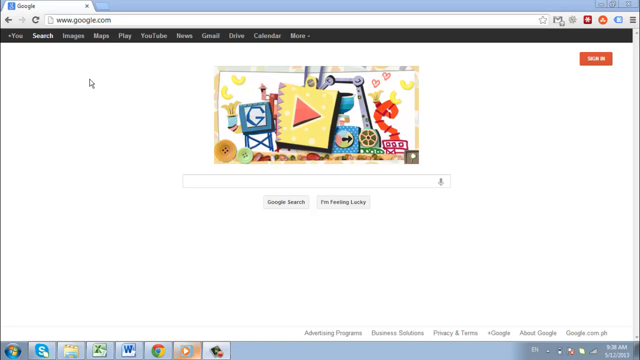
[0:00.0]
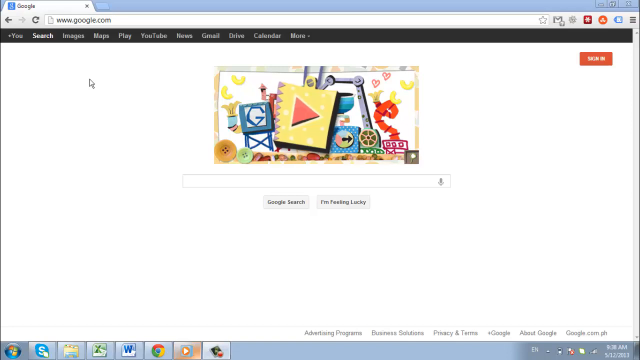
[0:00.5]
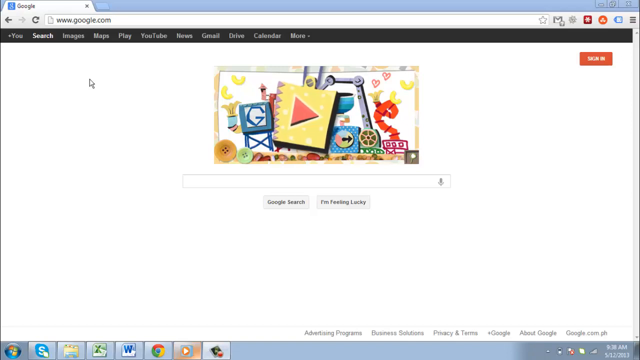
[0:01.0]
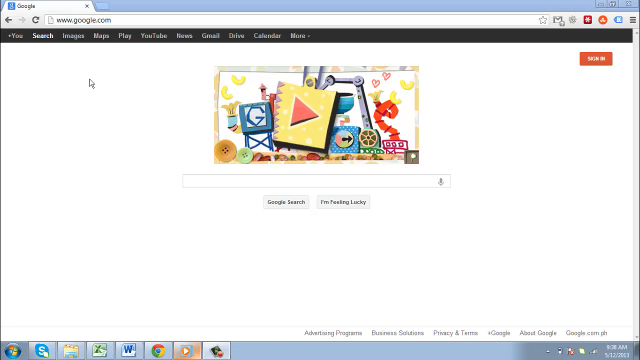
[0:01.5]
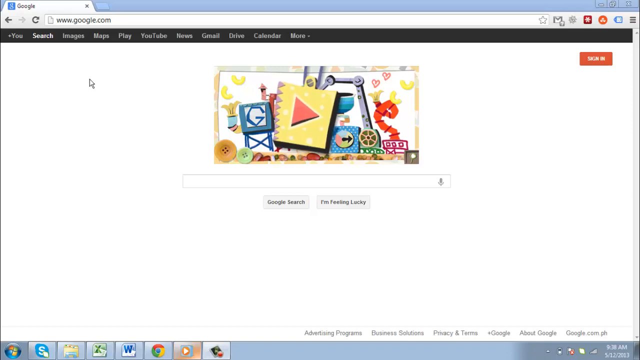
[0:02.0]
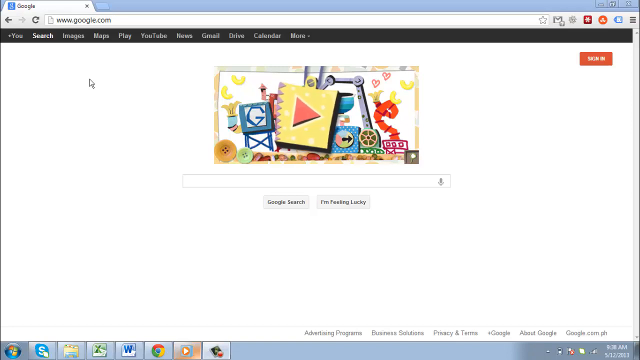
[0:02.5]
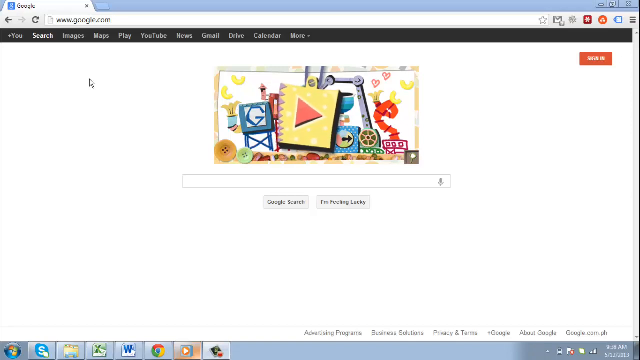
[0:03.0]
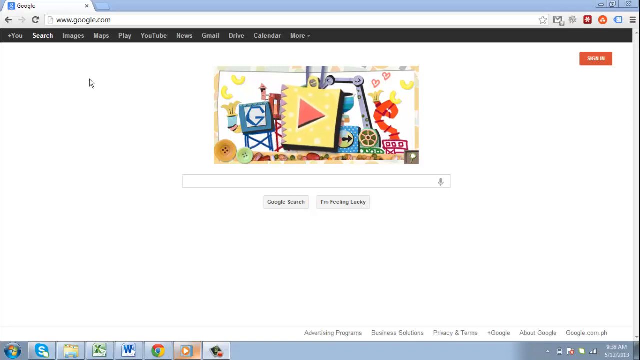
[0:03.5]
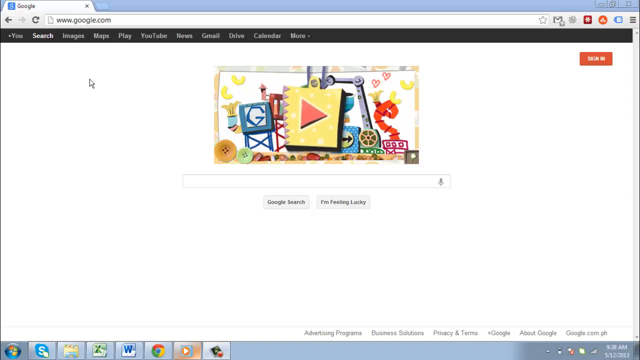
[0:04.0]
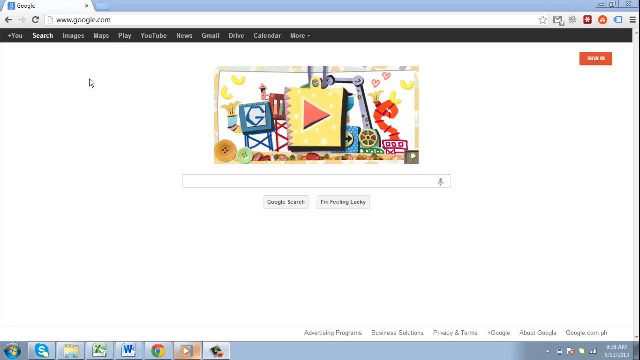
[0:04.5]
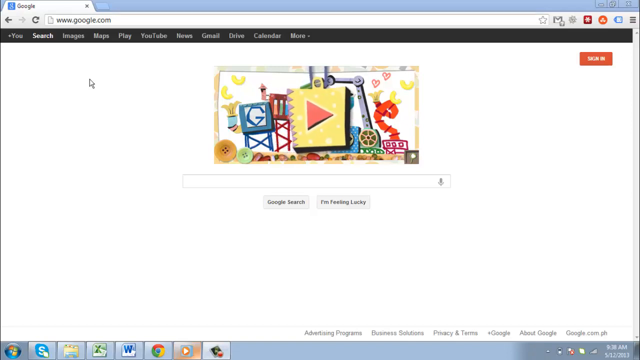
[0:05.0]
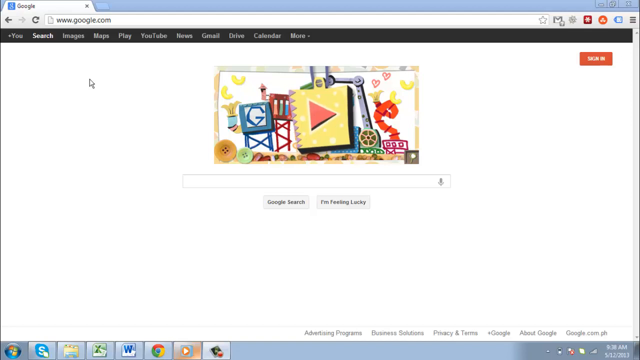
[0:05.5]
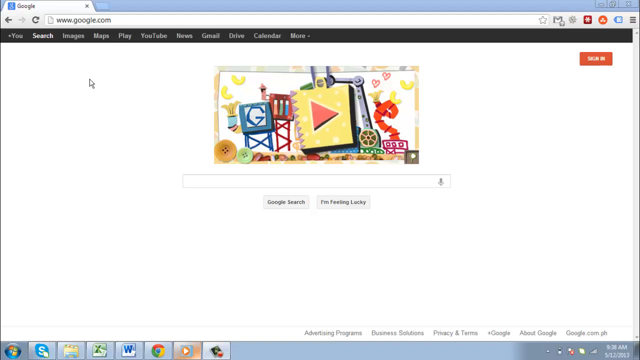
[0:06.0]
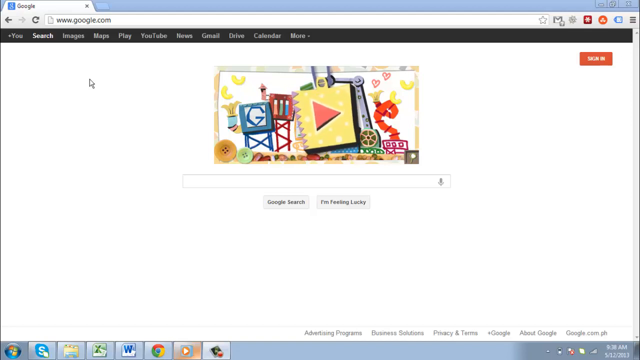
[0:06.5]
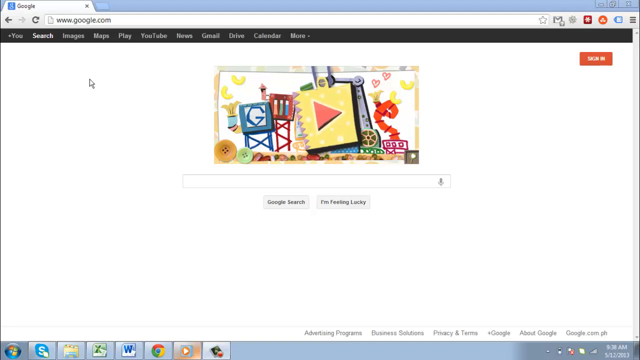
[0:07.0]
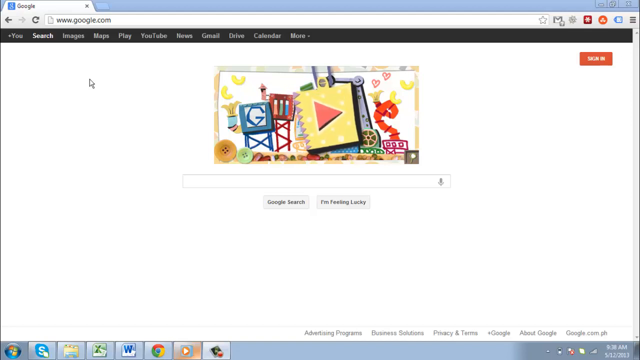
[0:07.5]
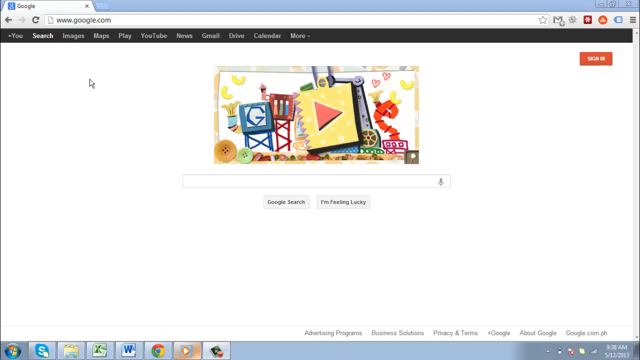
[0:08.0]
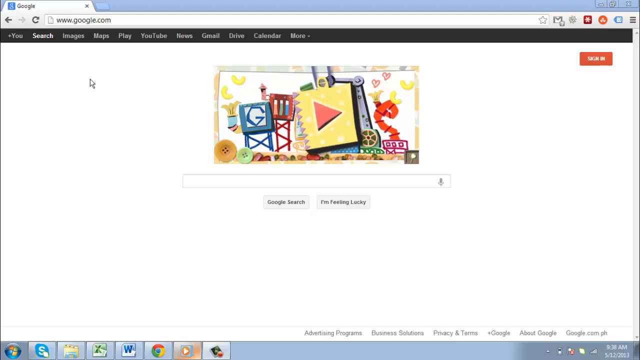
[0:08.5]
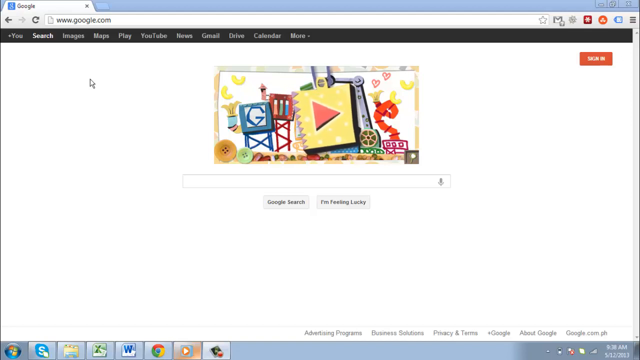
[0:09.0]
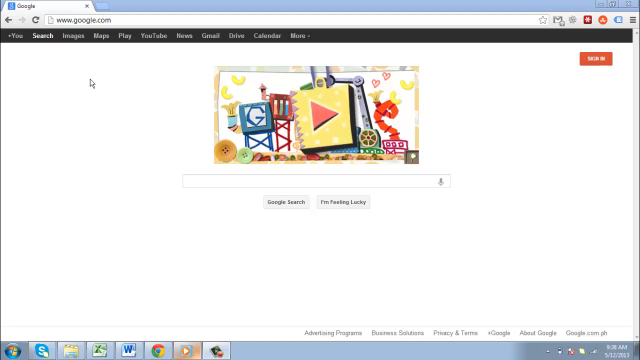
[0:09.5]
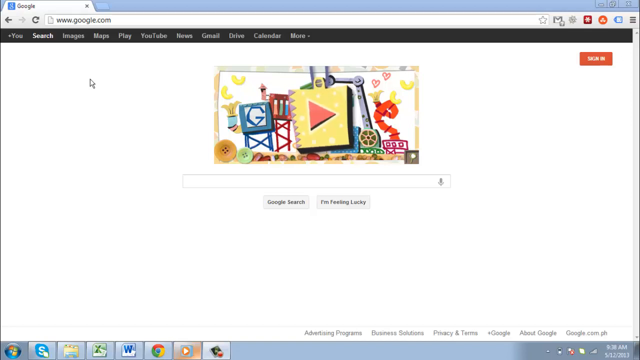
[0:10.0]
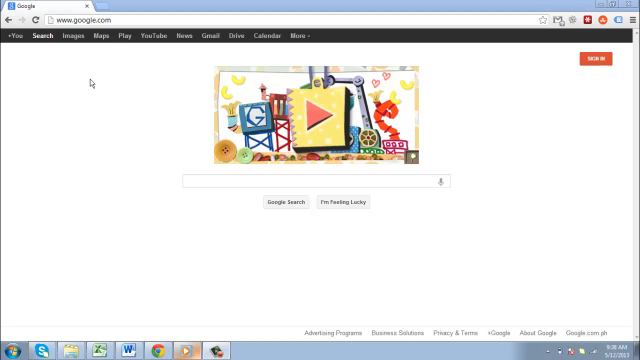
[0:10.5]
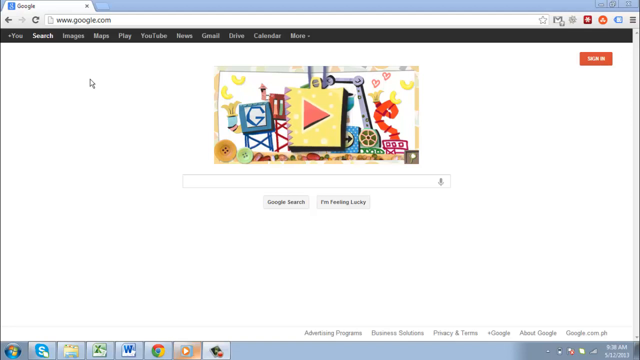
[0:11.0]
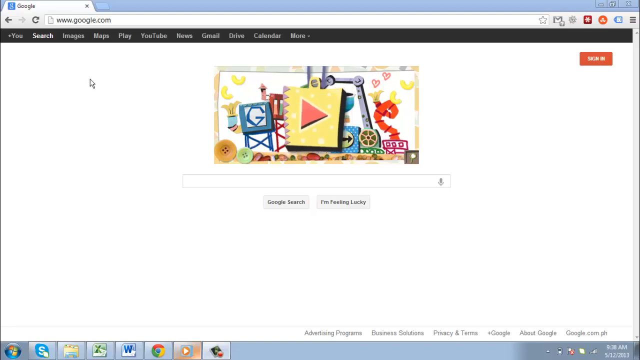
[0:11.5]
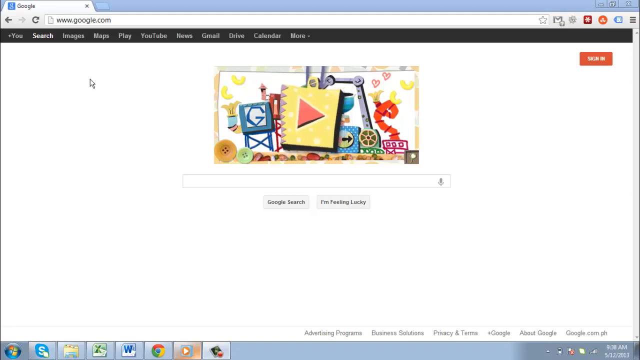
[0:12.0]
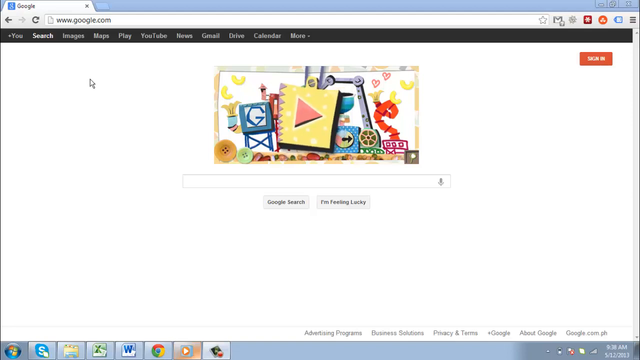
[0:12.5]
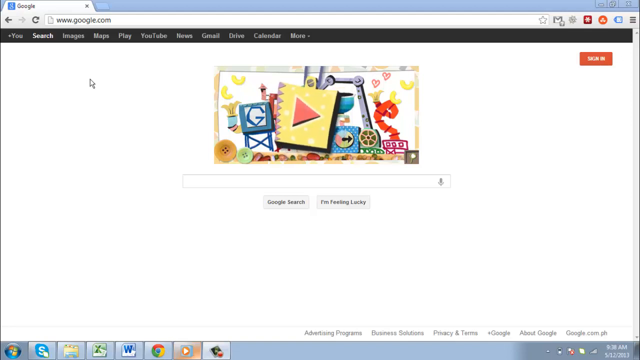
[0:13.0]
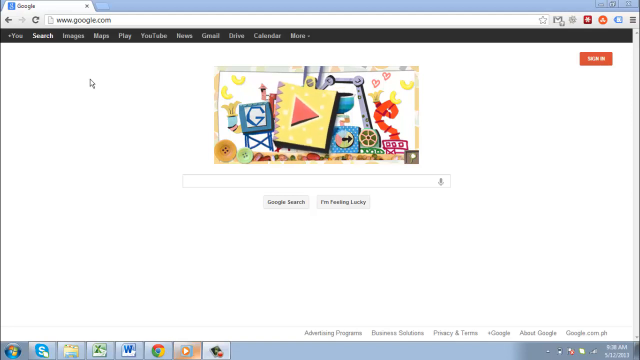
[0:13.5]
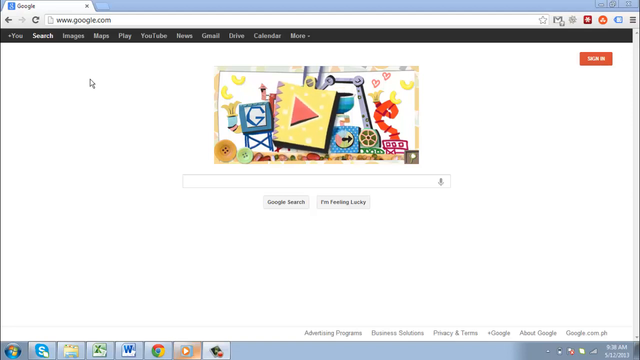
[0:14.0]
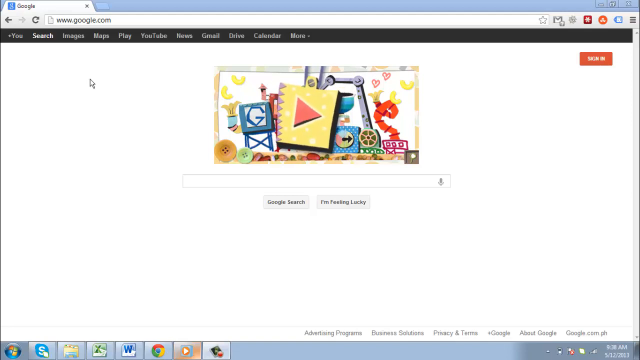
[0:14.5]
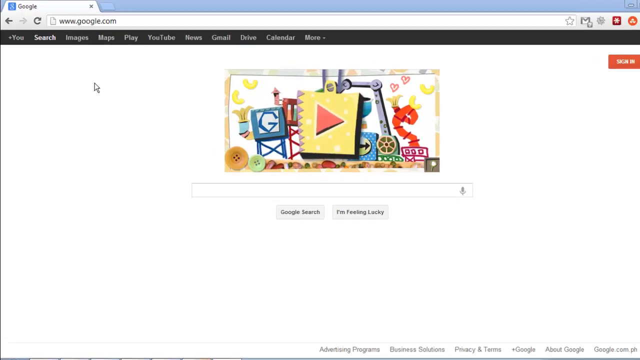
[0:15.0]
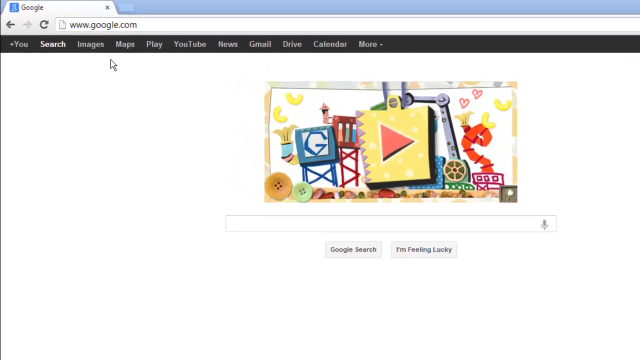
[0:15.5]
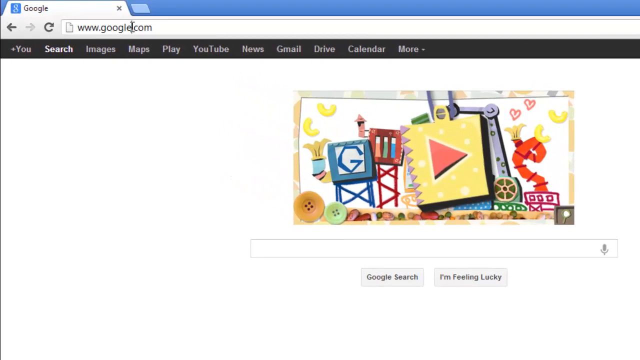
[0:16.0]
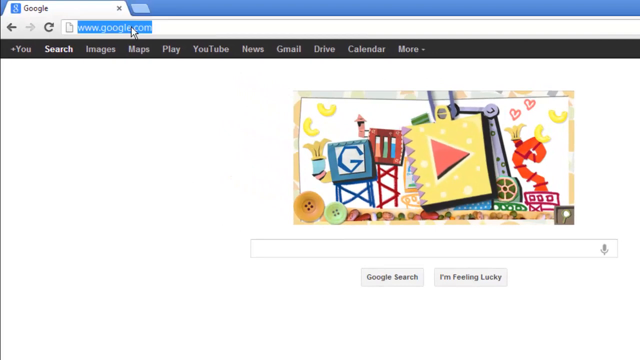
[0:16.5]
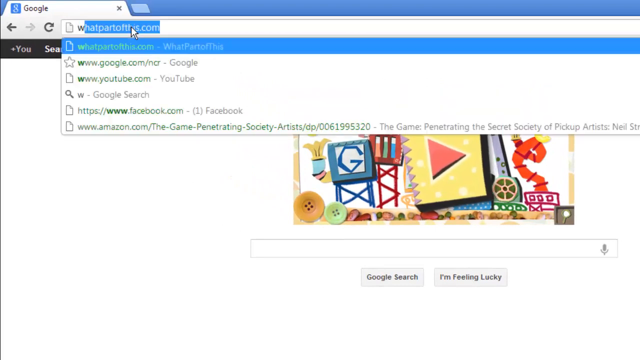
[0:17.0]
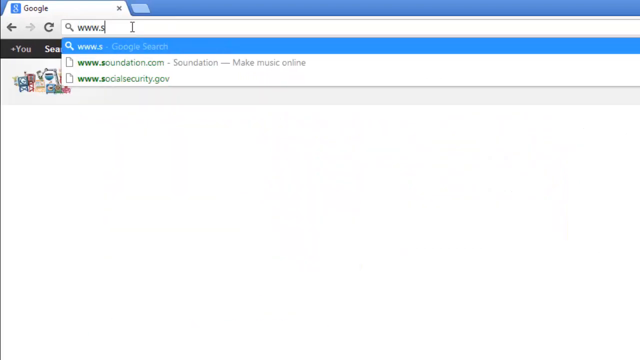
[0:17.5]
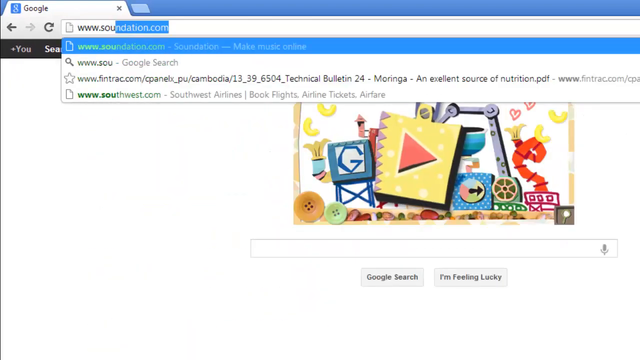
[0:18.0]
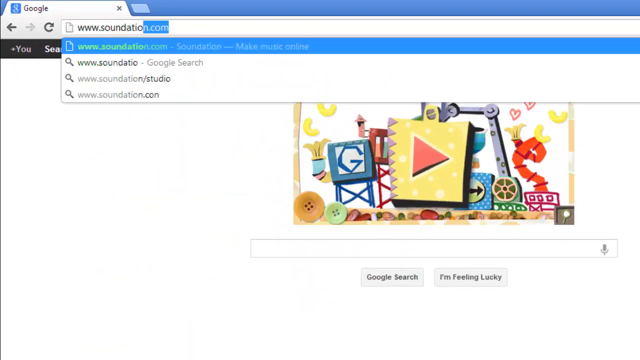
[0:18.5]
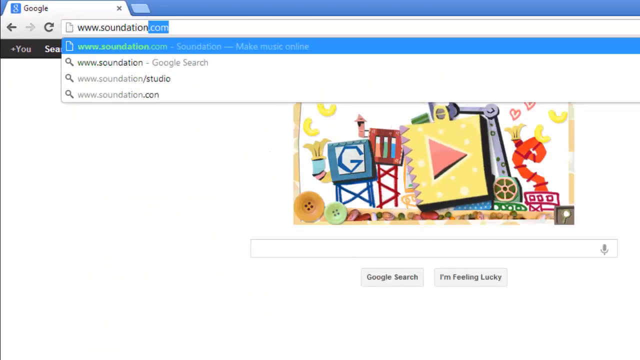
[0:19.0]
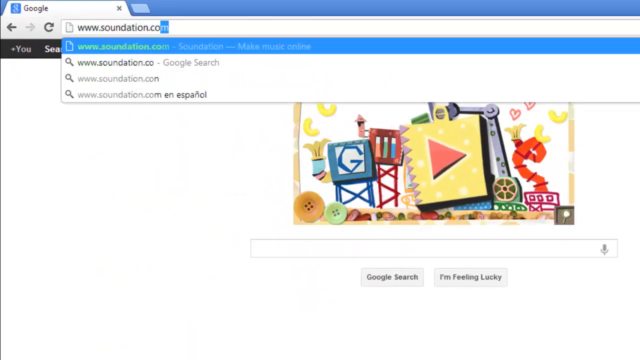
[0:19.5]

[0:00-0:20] The video opens on a recording of a web browser: Google Chrome is open to the google.com homepage, with the mouse cursor resting on blank white space toward the top left corner. In the center of the screen is the Google search bar, with buttons underneath that read "Google search" and "I'm feeling lucky." The Google logo shows each letter of Google on a cartoon-like crafted design, with a play button rocking left and right in the center of the logo. The camera zooms in onto the URL text box. The user clicks on the text box, highlighting the URL www.google.com in blue, and types out the URL www.soundation.com. The browser navigates to the entered URL, and the webpage takes a few moments to load, showing a blank page at first before the images and the page itself load.